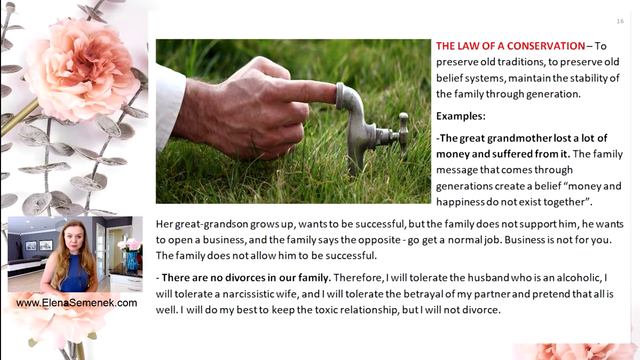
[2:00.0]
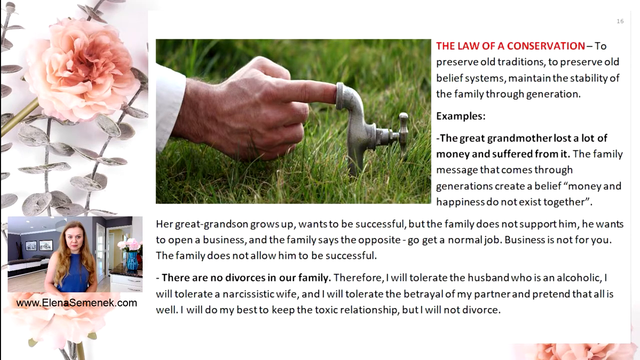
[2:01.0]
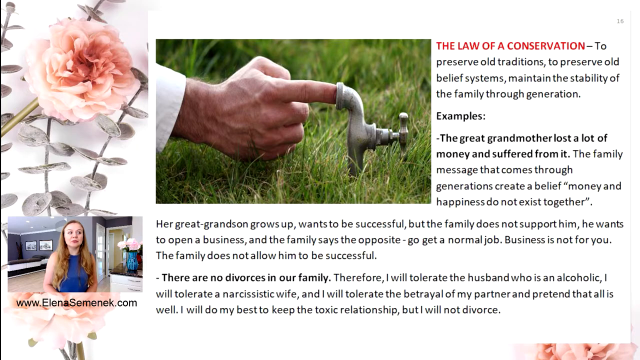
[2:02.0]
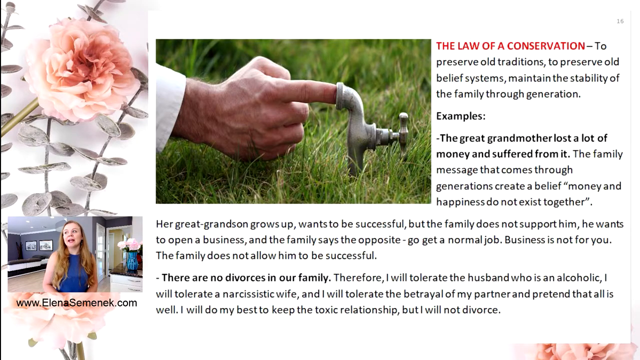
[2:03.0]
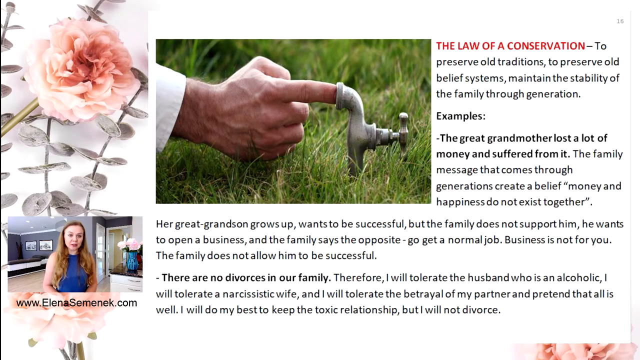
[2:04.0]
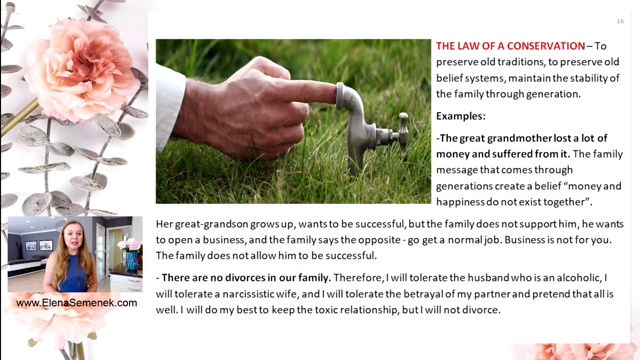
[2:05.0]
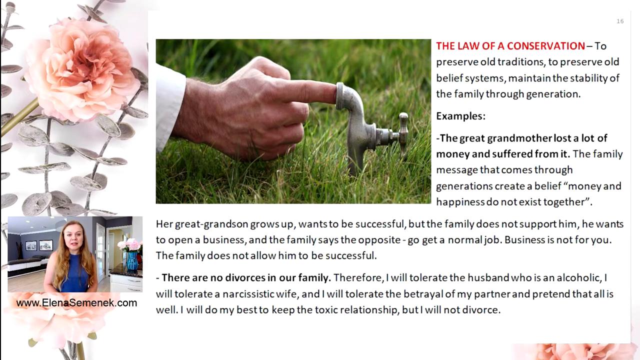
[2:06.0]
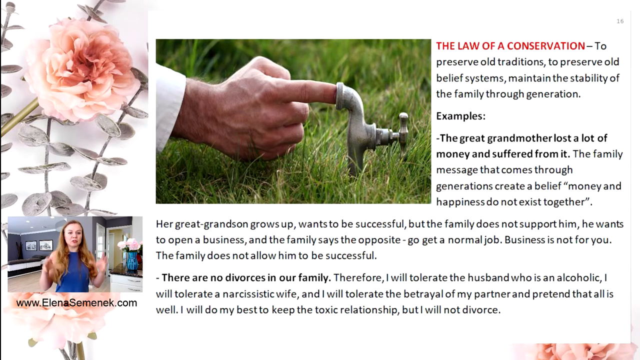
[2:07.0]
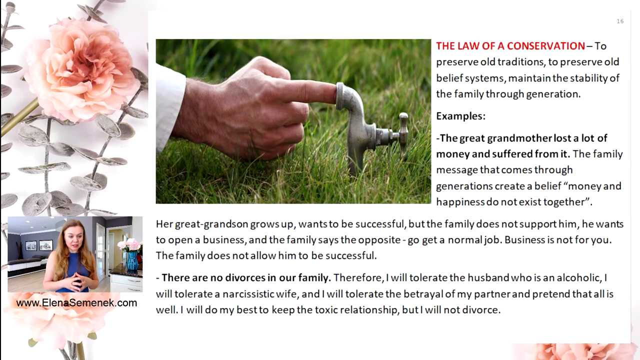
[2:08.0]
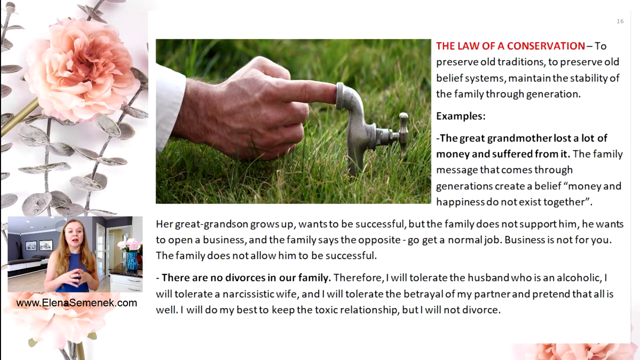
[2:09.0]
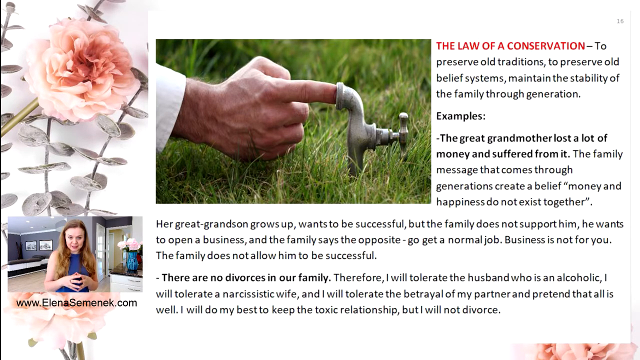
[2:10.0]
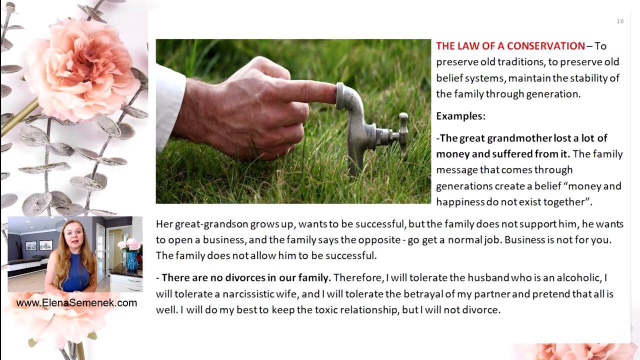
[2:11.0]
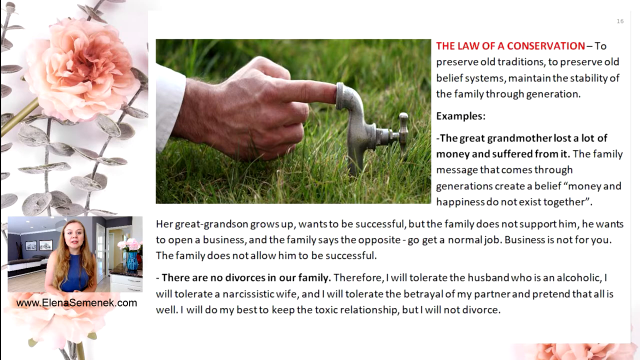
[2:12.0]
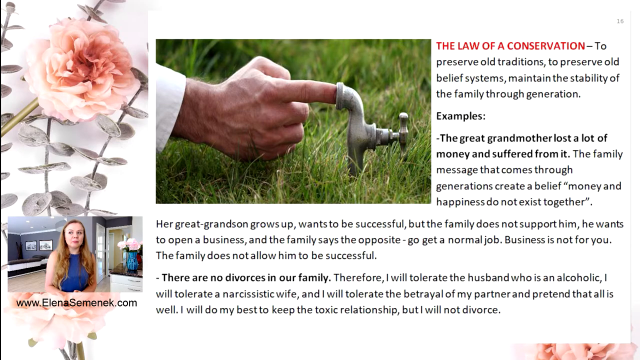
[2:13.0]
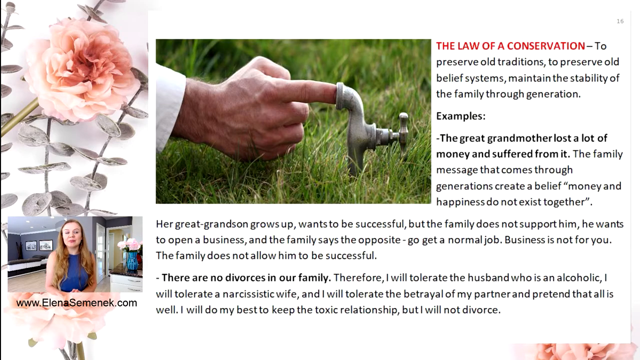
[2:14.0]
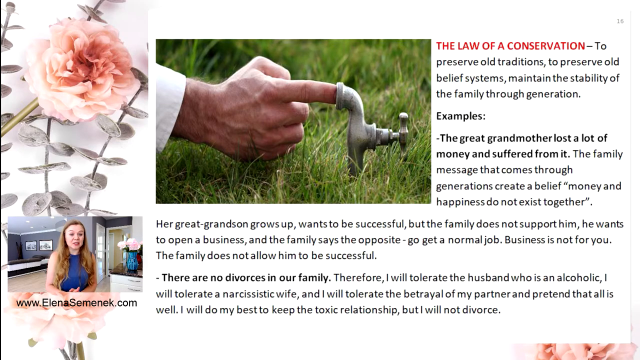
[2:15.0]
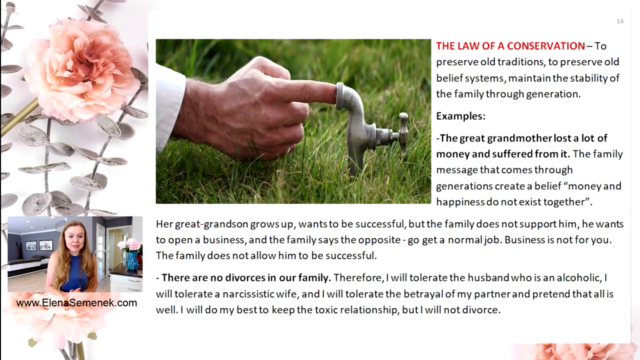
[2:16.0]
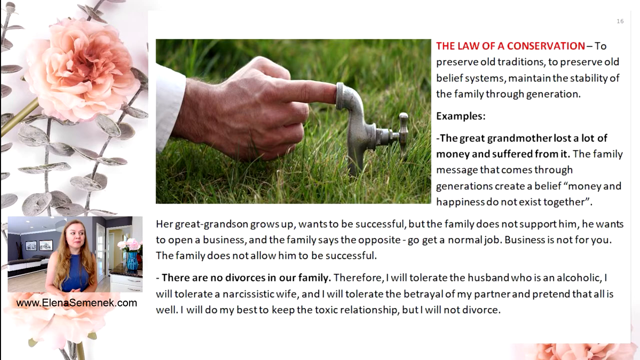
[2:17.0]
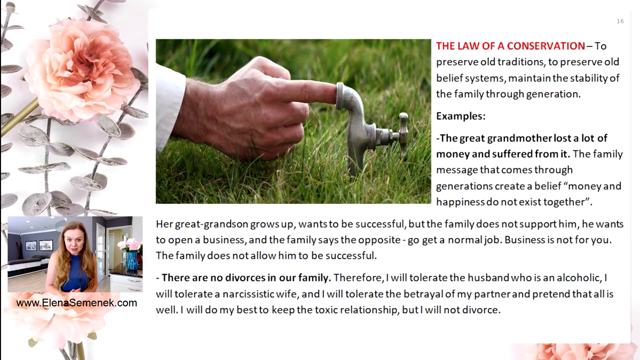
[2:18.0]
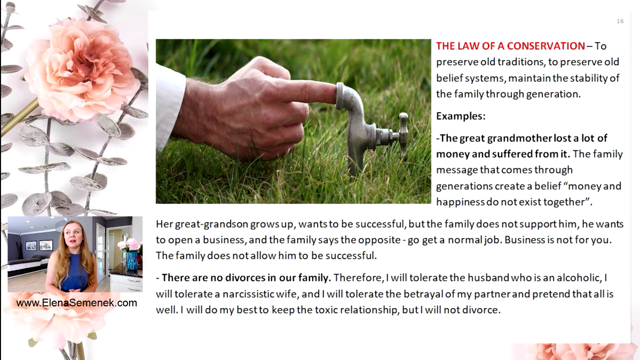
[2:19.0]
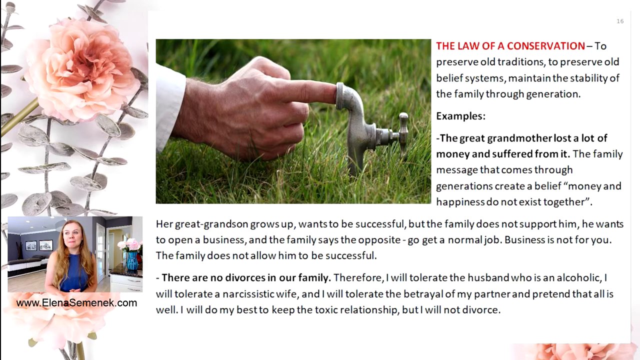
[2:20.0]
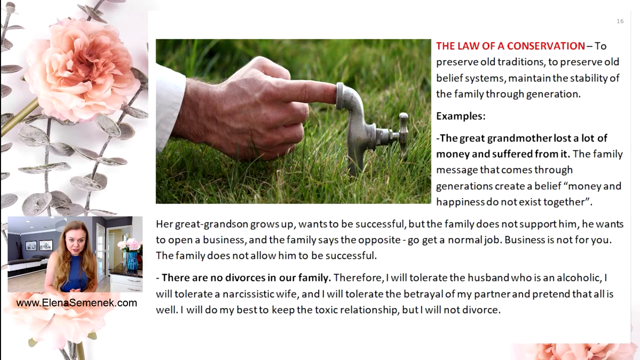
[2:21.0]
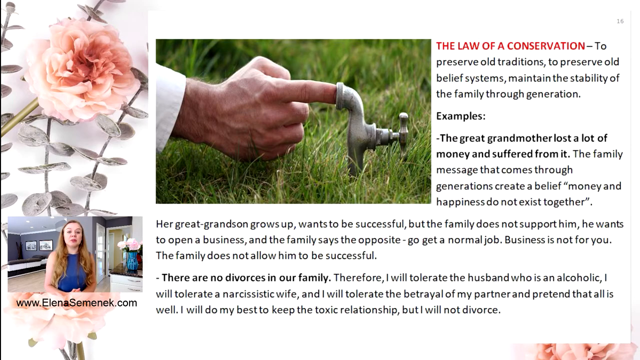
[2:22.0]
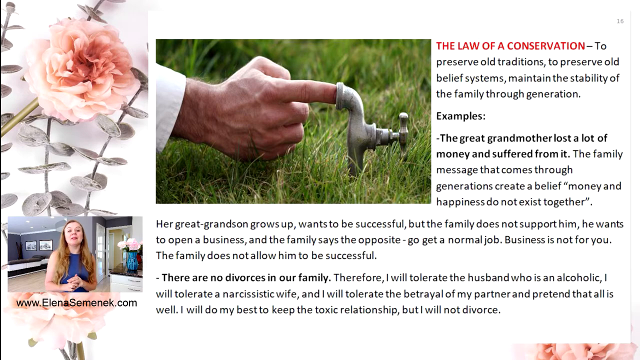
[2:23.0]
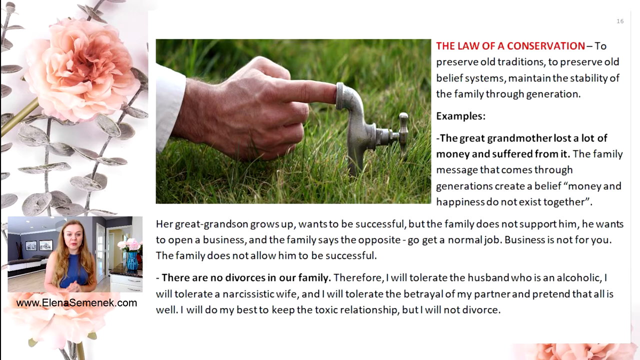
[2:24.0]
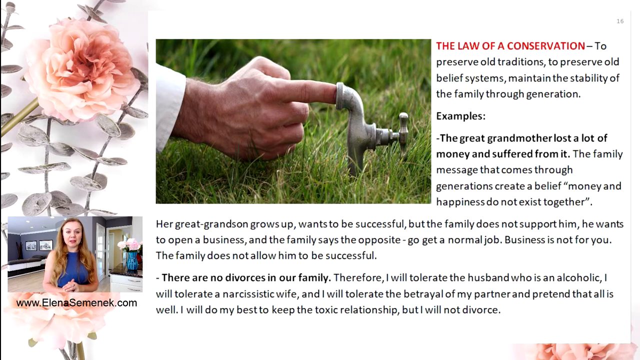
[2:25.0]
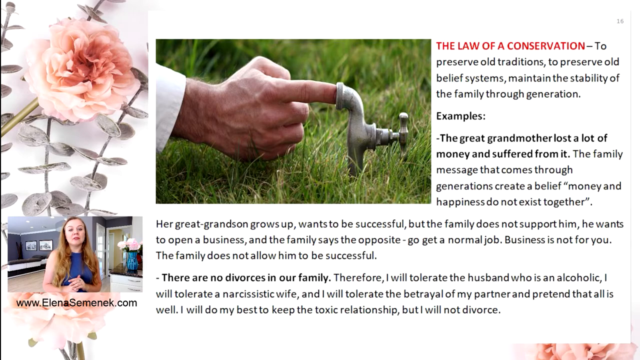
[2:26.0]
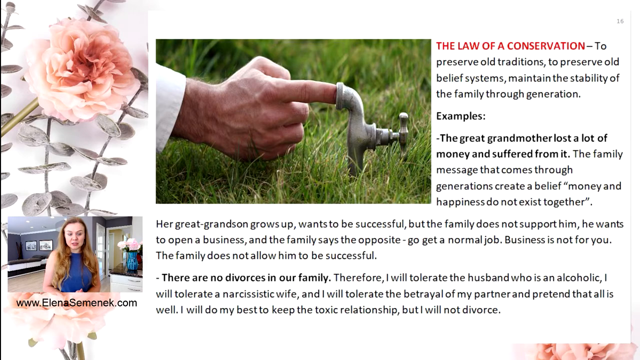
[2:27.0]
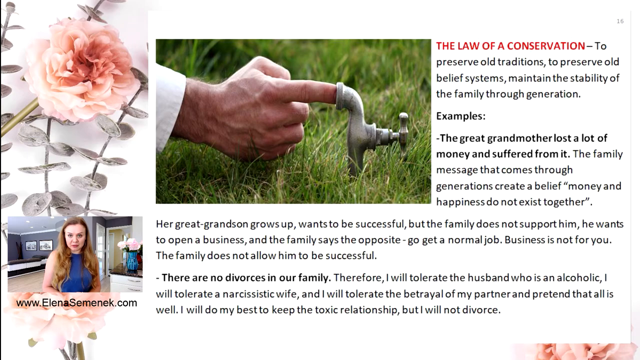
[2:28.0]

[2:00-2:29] The slide is still the same, and the lady keeps talking. She has long blonde hair and wears a sleeveless blue blouse, moving her hands and arms a lot as she speaks. Below her video, a link written in black reads "www.elenasemenek.com". She seems to be in a bedroom or room with gray walls; the ceiling seems white or light blue. There seems to be a single bed with a lot of space around it. On its left side, two paintings or photos of the same rectangular size hang on the wall, and there is a piece of furniture or a plant in the bottom corner. On its right side, an open door gives a view of a corridor whose walls are beige or light yellow. Also on its right side is a small white piece of furniture with a black tapestry and a small pot holding three white flowers.